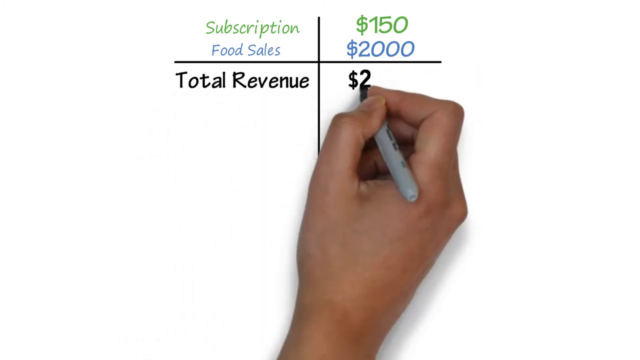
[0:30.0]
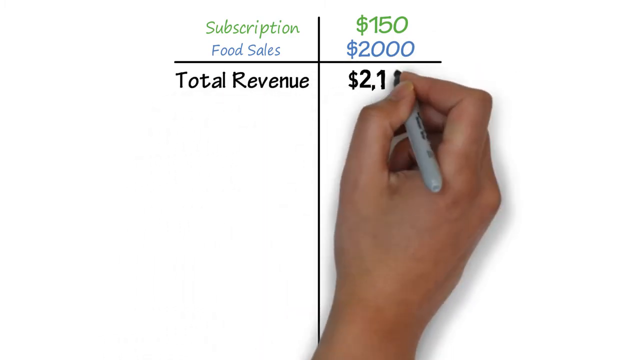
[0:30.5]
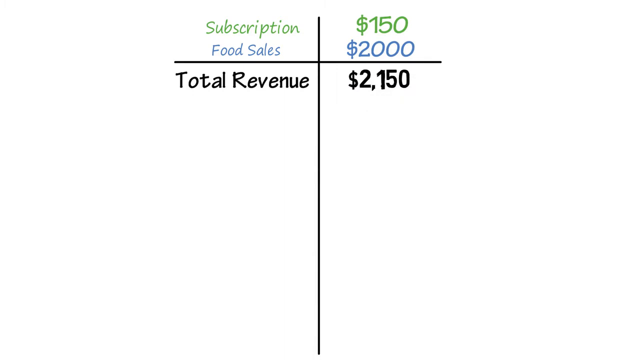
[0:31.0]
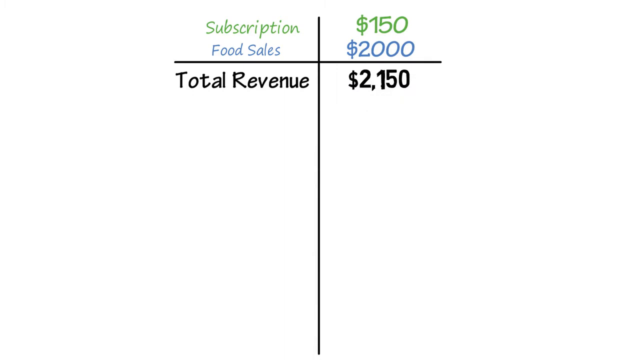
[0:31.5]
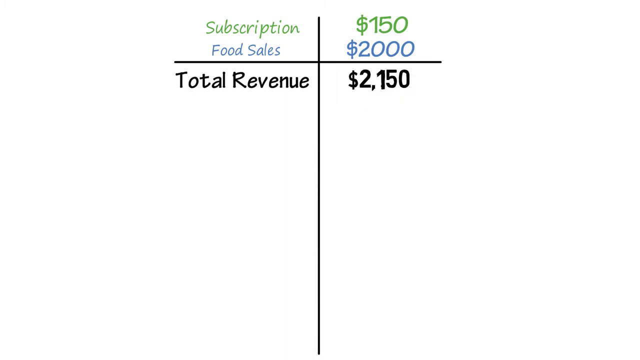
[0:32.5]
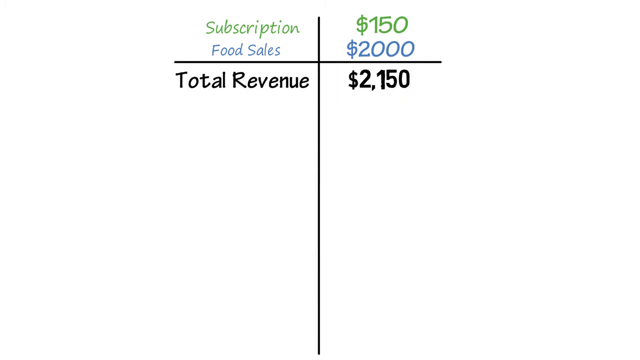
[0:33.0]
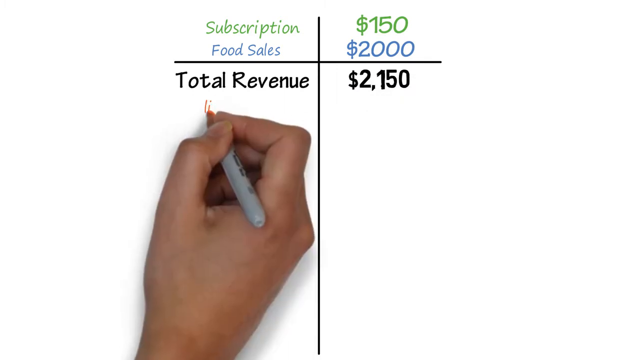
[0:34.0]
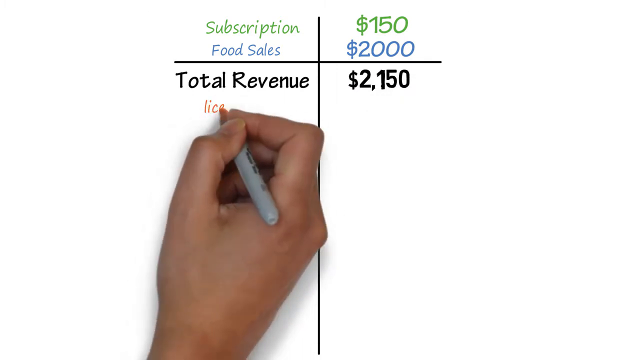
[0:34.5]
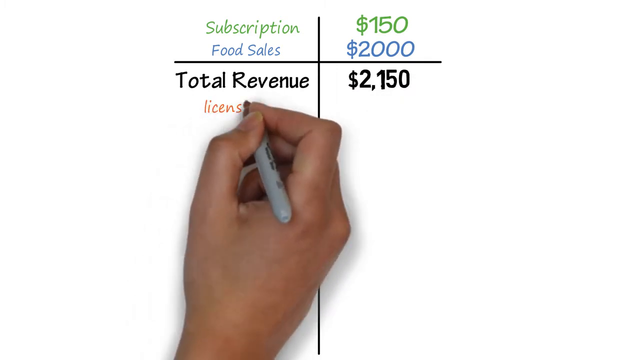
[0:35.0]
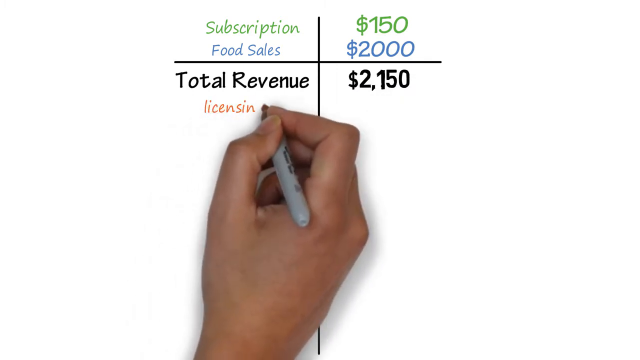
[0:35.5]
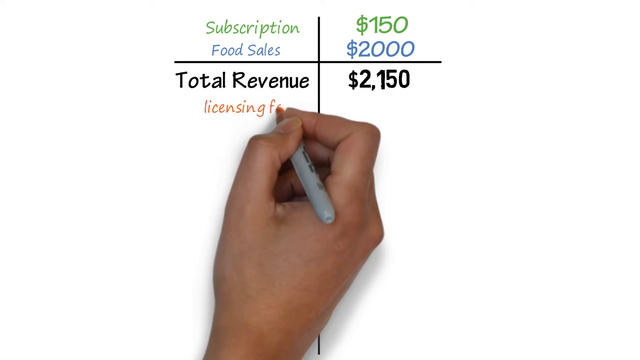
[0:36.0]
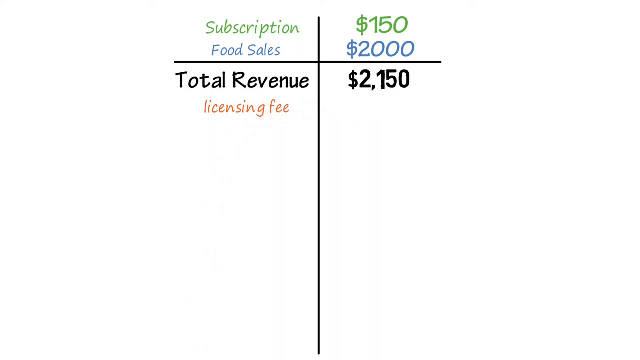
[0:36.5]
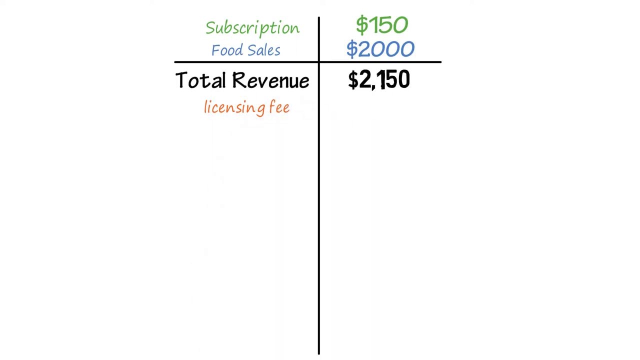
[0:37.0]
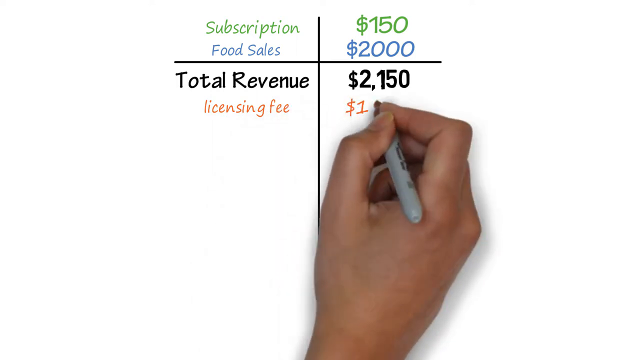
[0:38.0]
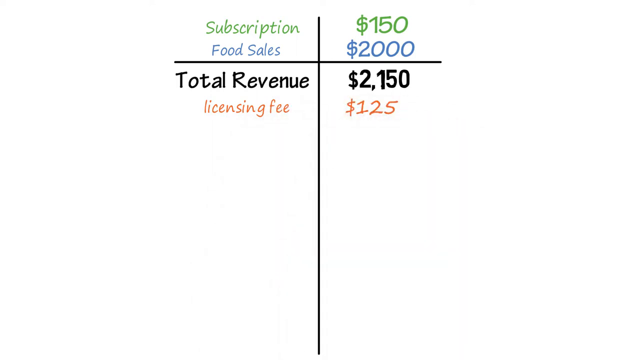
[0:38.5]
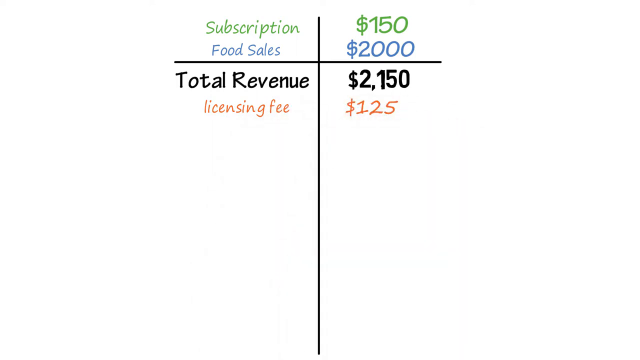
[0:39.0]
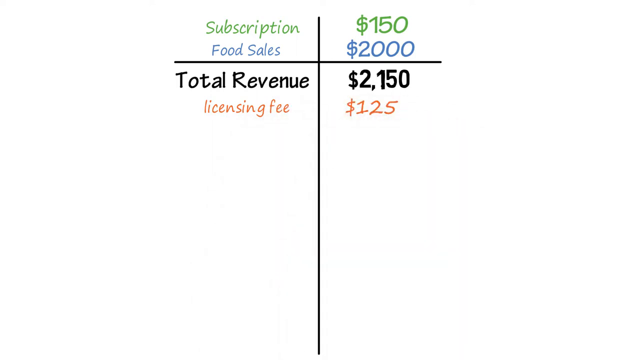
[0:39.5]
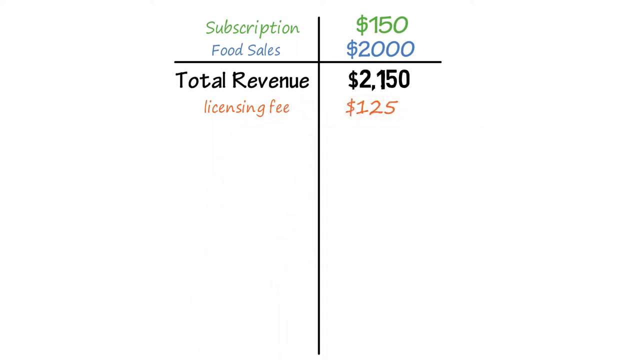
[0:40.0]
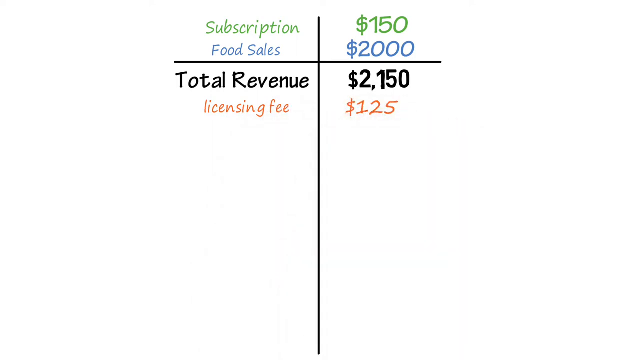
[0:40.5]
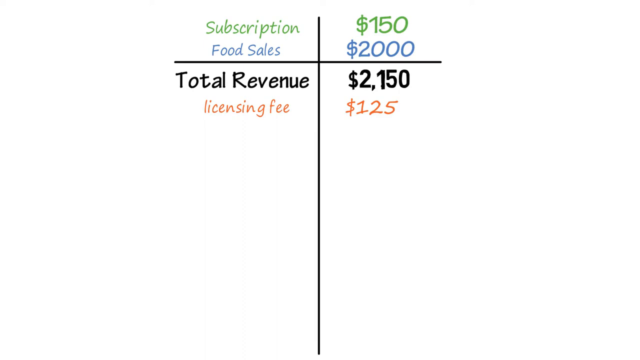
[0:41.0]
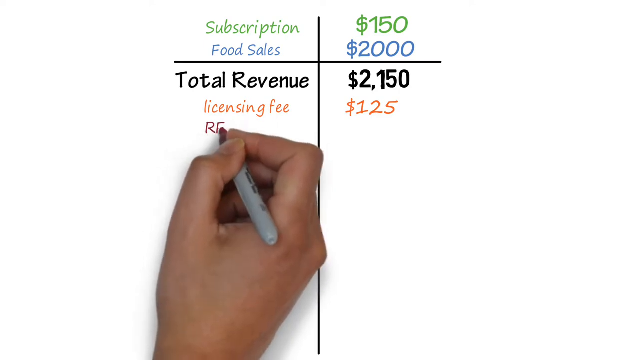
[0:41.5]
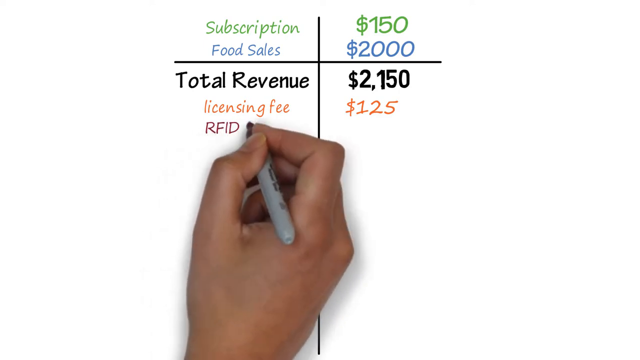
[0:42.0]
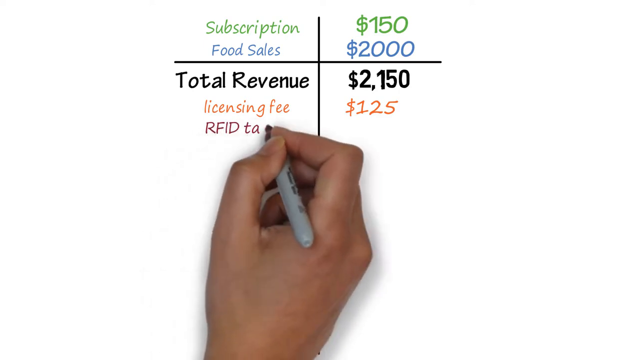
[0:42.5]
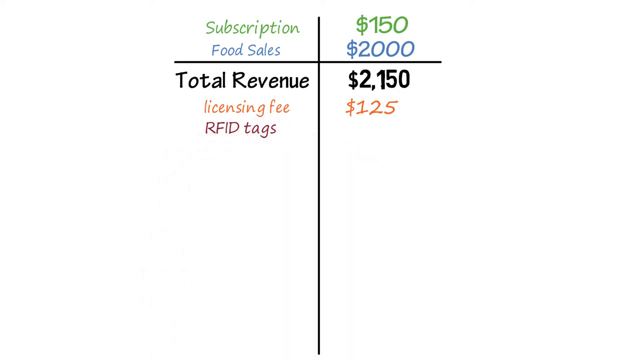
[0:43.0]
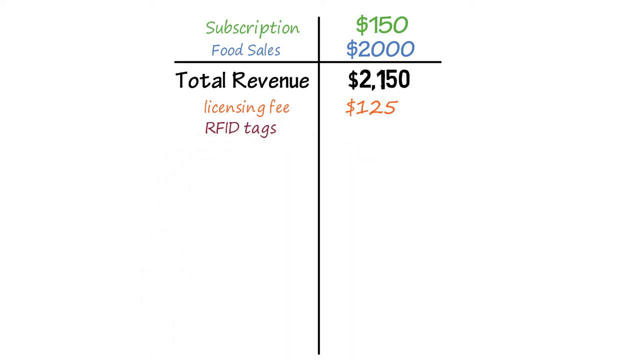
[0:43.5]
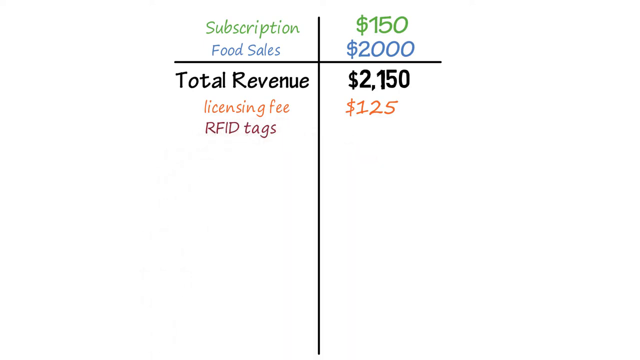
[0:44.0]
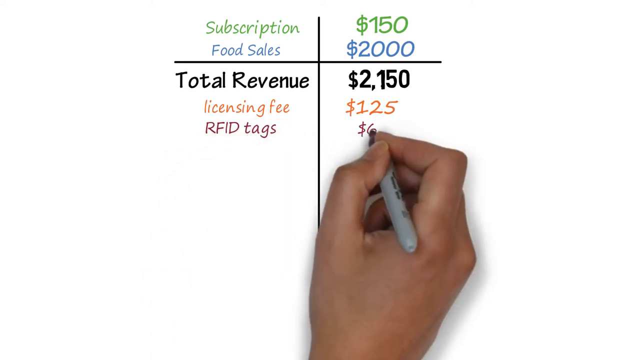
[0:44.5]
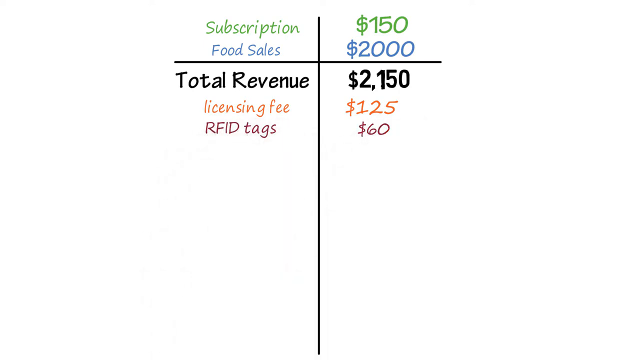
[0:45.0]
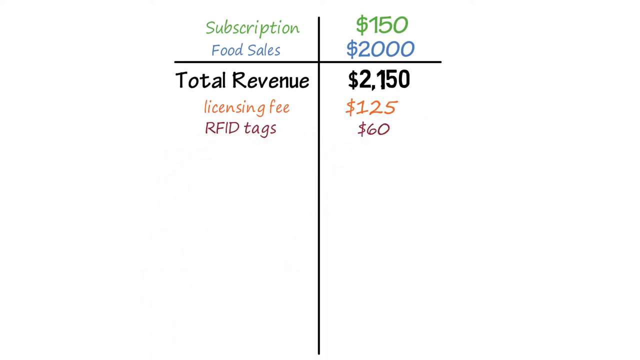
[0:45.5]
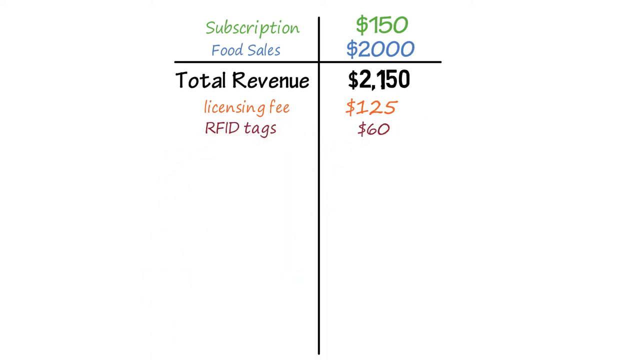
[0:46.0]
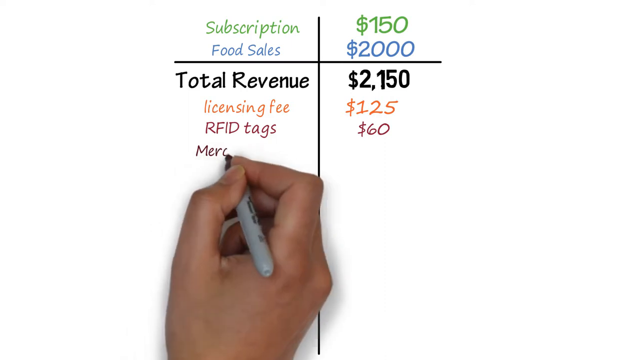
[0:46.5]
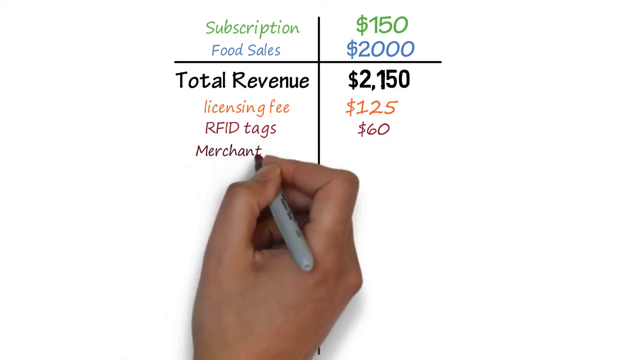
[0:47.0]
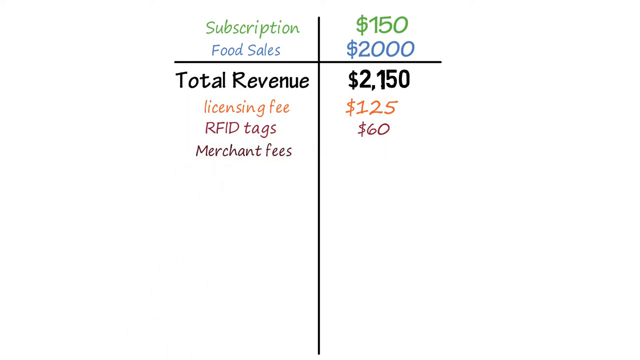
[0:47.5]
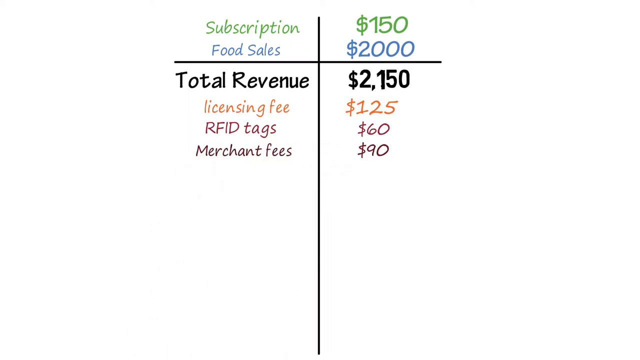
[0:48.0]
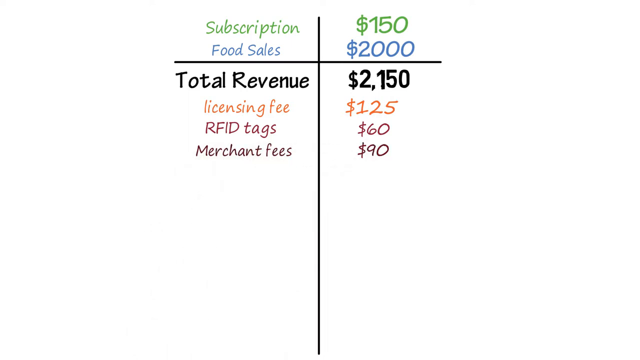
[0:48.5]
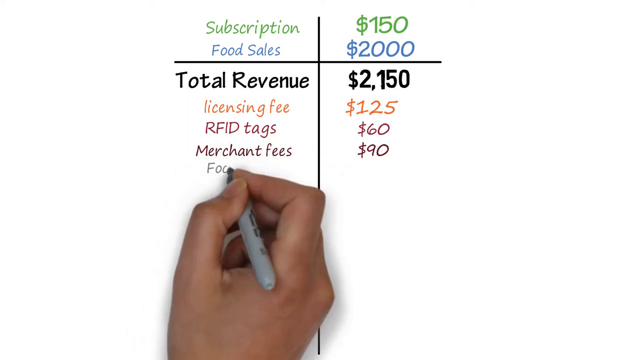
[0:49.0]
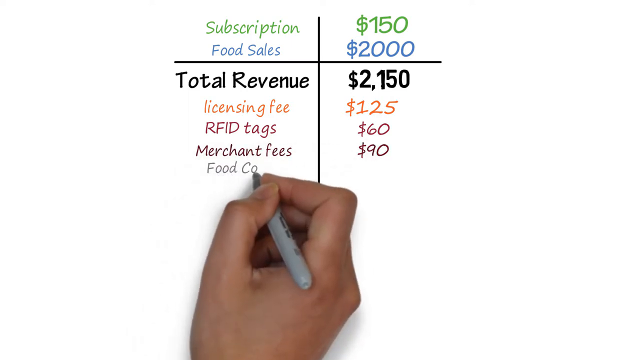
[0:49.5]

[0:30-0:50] With the screen divided by the original black line and the crossing line, "total revenue" is on the left side in bold black ink, and next to it, in the same bold black ink, the amount "$2,150" is written. More lines of text are then written on the left side, each criterion in a different ink, and on the right side the corresponding amounts are written in the same ink as each criterion so that they match.